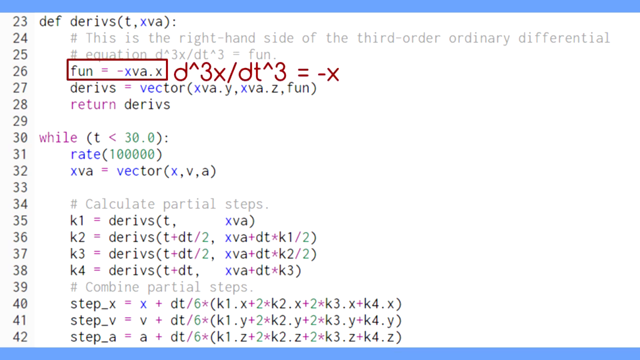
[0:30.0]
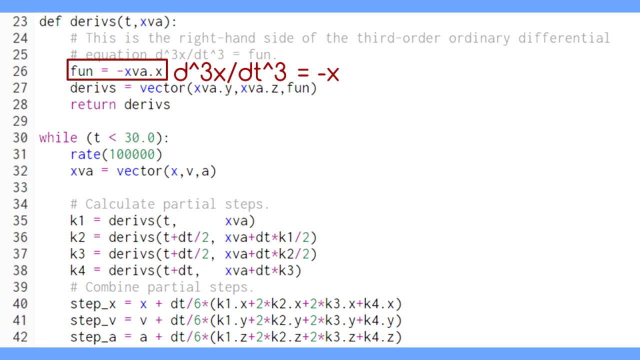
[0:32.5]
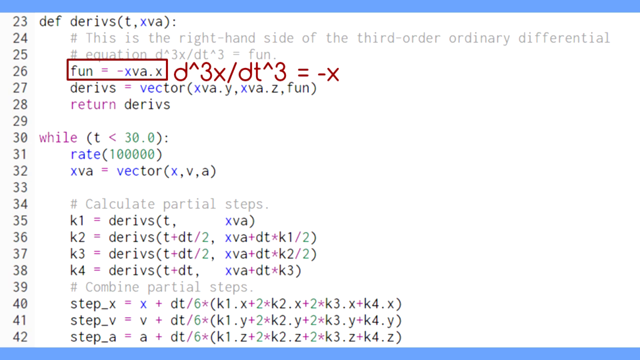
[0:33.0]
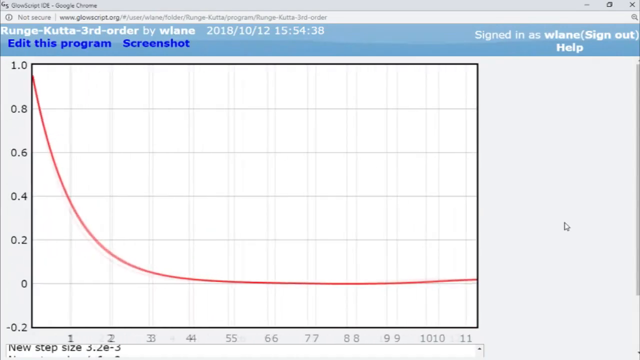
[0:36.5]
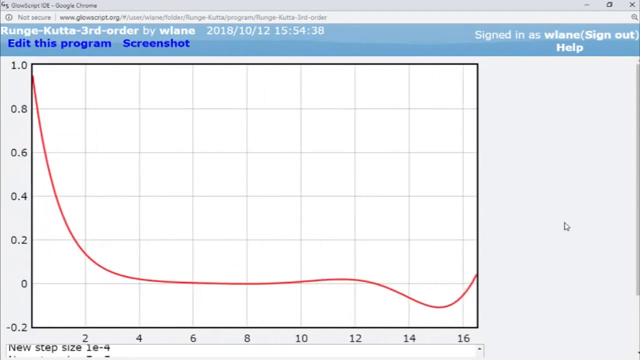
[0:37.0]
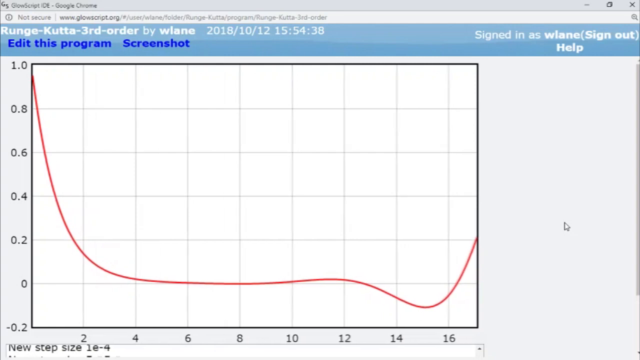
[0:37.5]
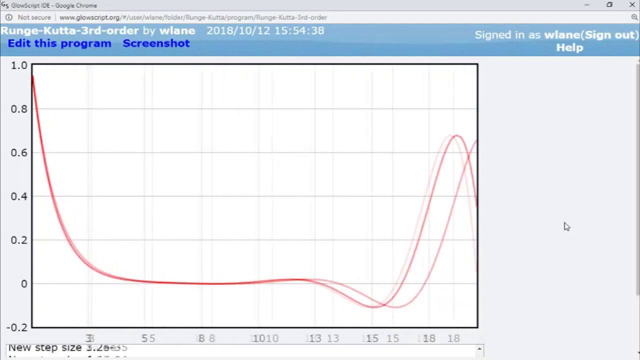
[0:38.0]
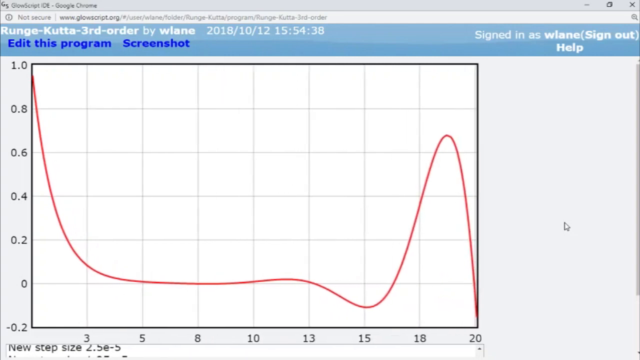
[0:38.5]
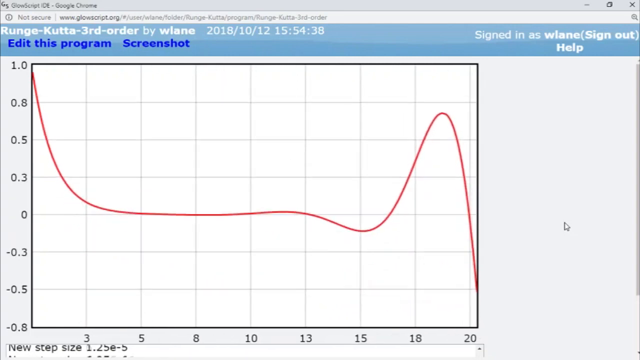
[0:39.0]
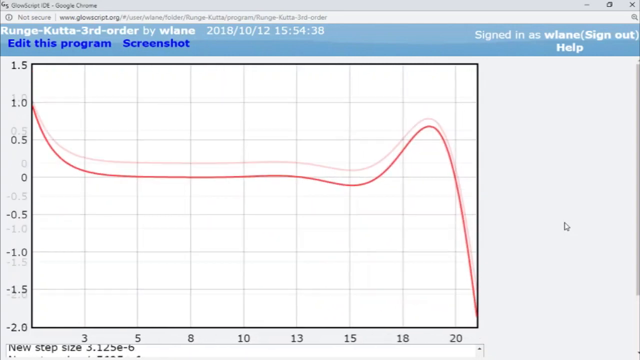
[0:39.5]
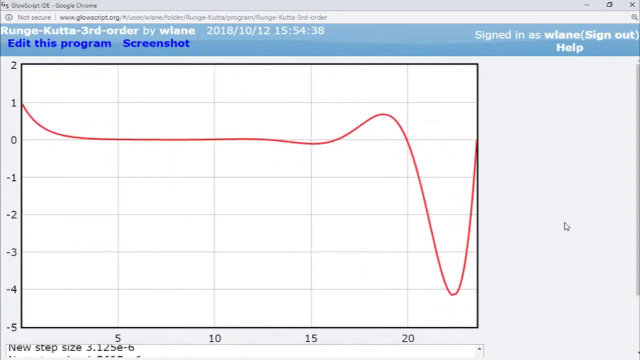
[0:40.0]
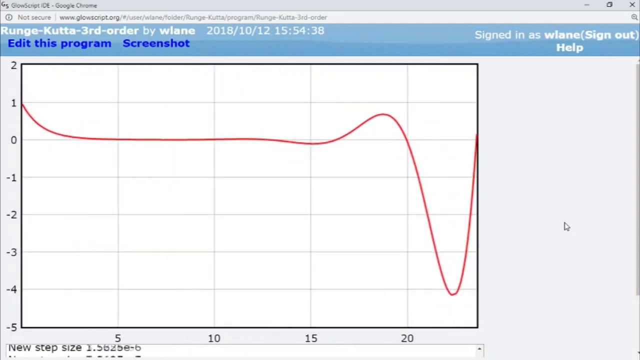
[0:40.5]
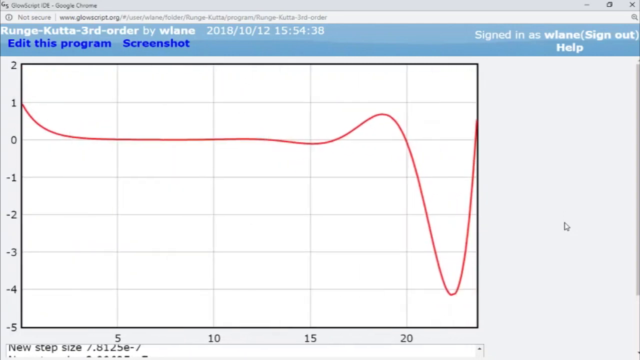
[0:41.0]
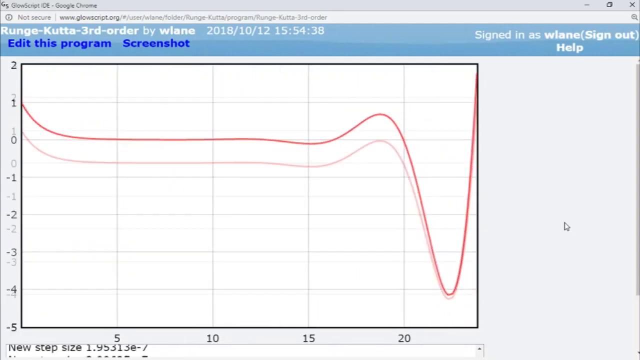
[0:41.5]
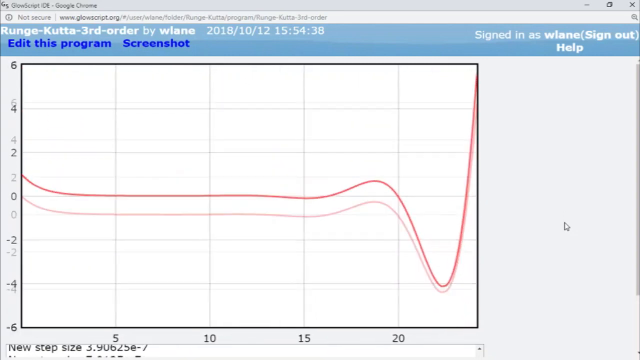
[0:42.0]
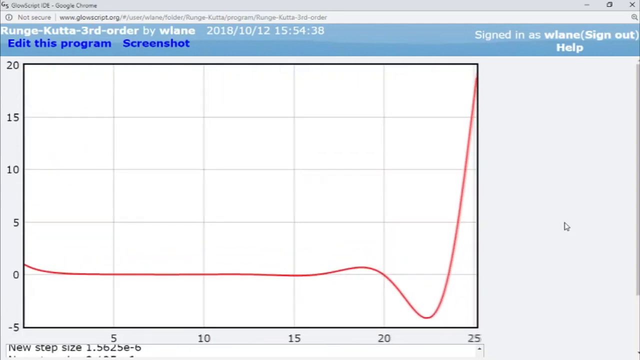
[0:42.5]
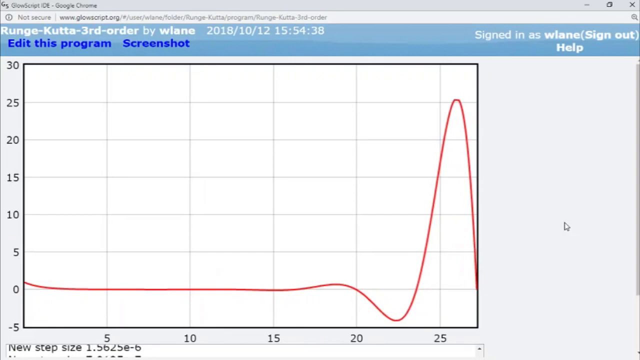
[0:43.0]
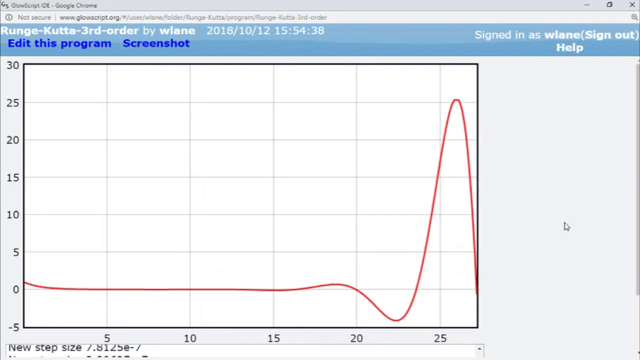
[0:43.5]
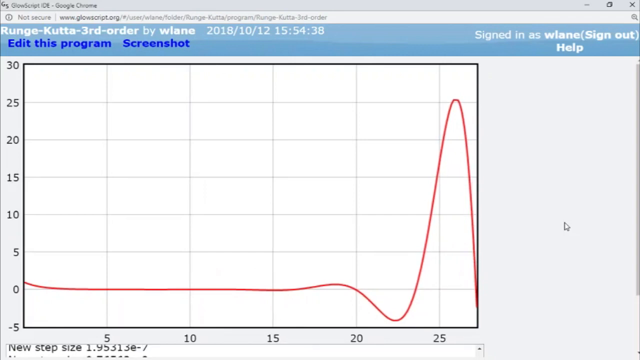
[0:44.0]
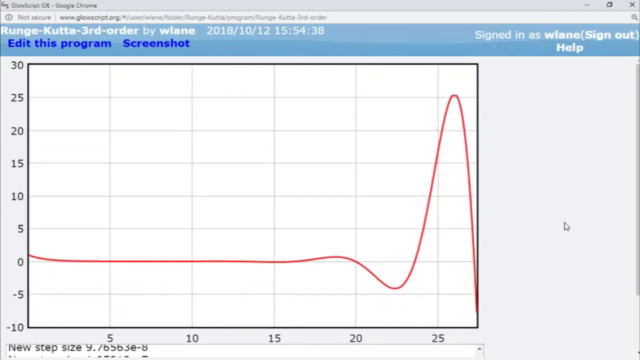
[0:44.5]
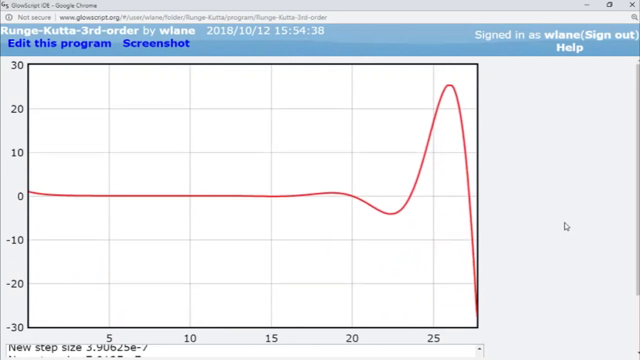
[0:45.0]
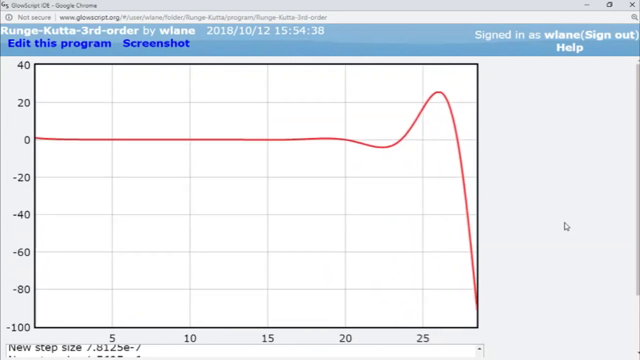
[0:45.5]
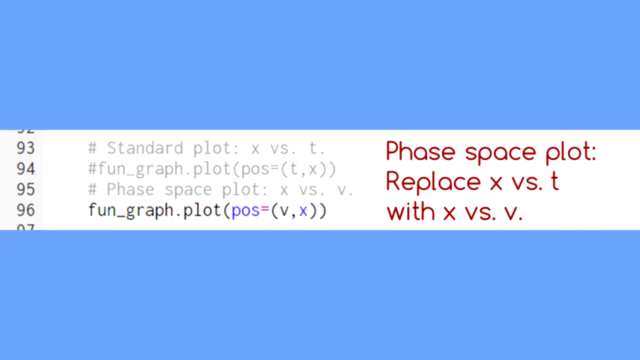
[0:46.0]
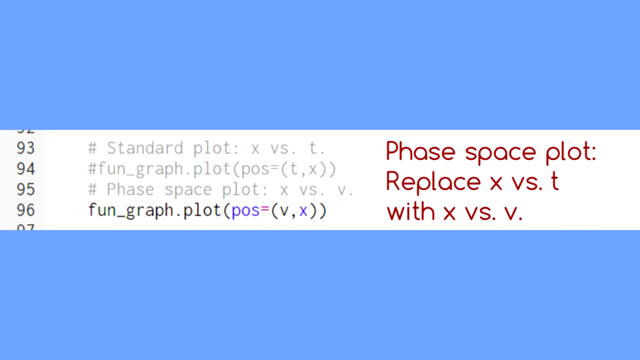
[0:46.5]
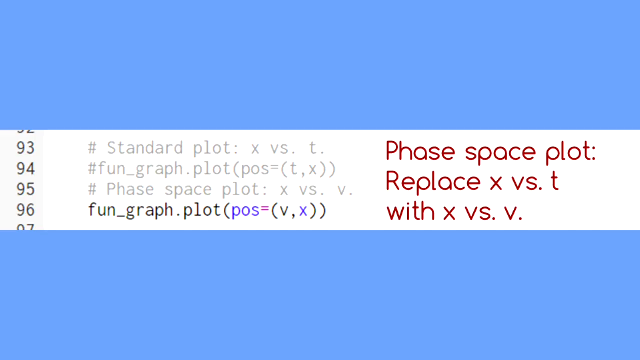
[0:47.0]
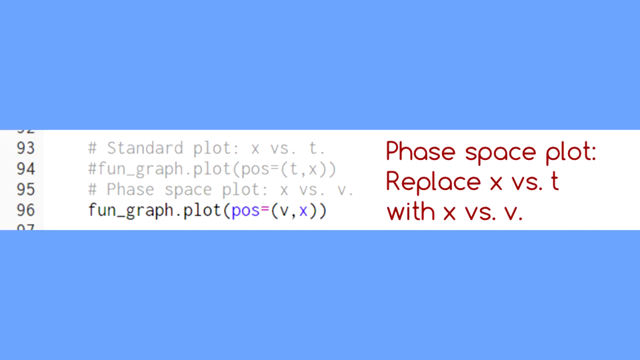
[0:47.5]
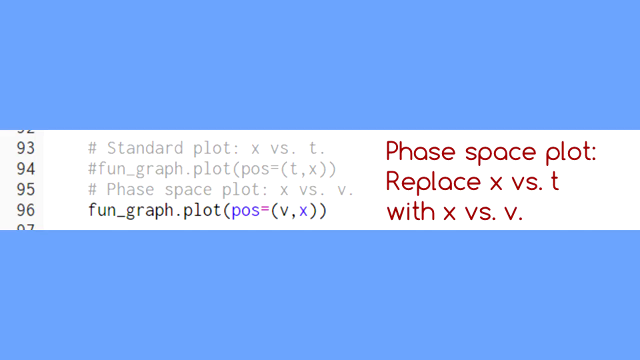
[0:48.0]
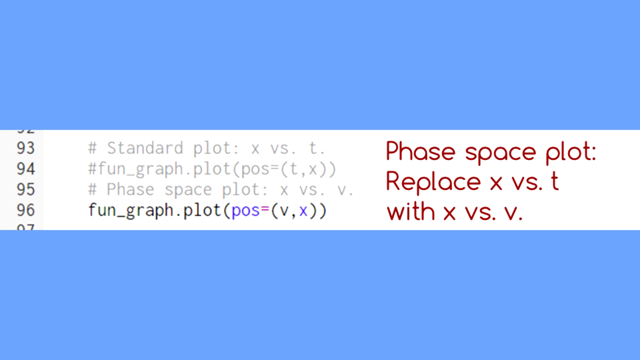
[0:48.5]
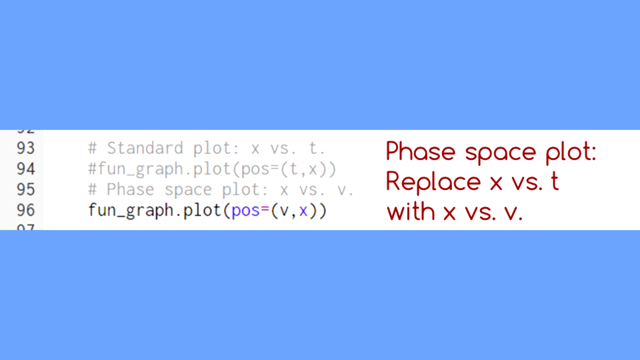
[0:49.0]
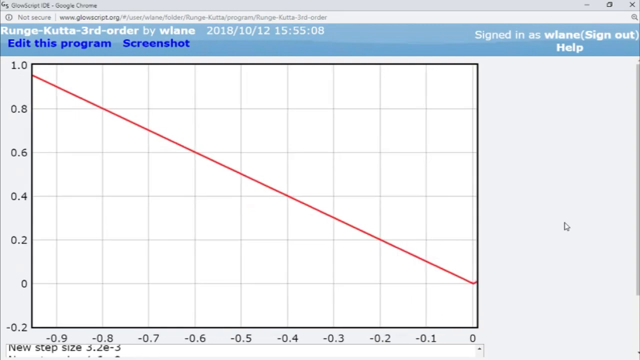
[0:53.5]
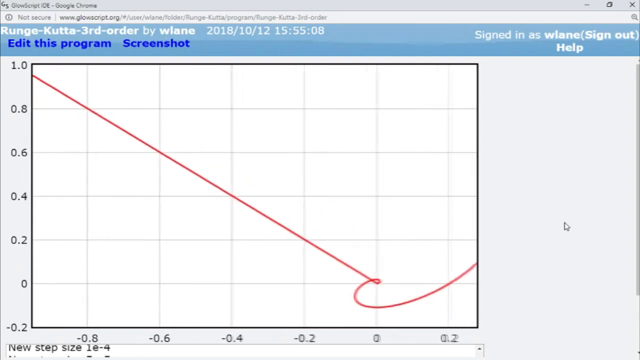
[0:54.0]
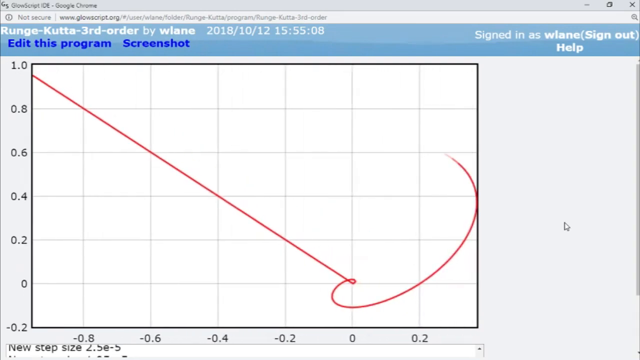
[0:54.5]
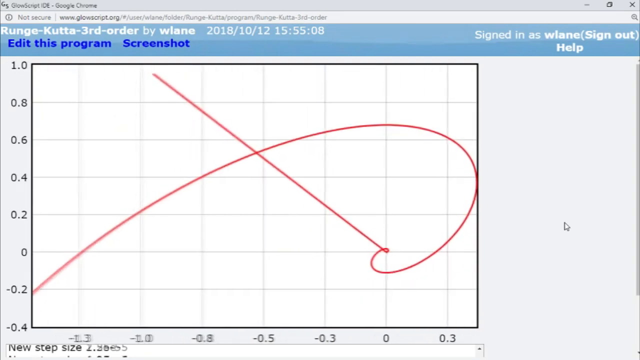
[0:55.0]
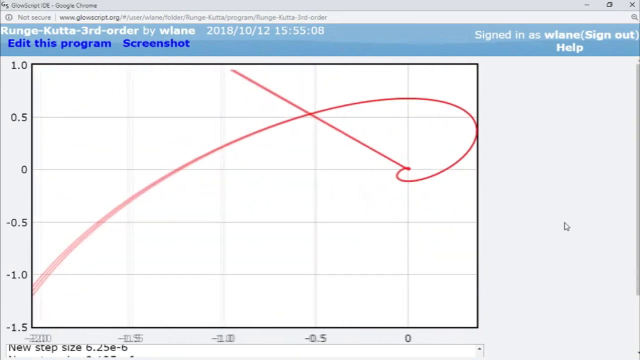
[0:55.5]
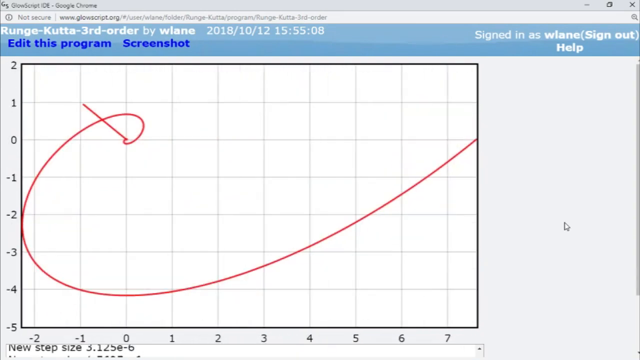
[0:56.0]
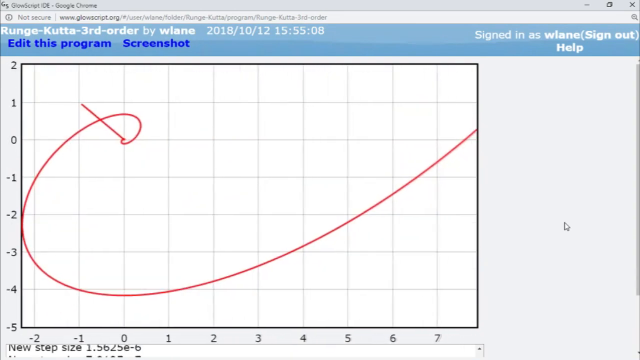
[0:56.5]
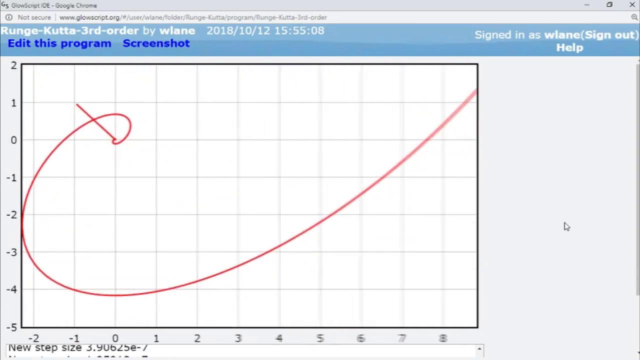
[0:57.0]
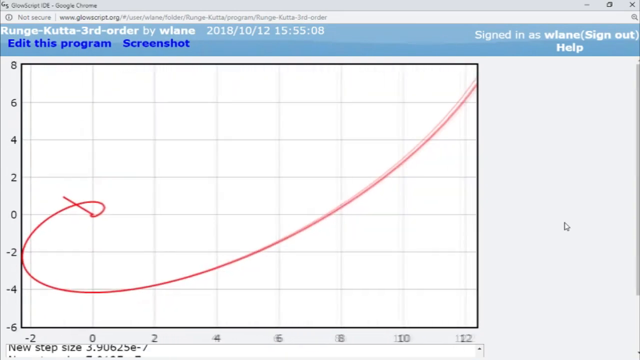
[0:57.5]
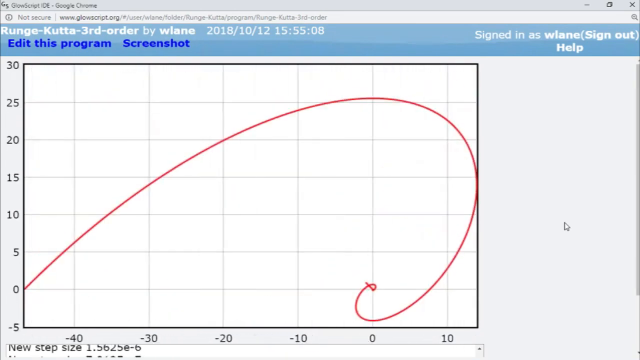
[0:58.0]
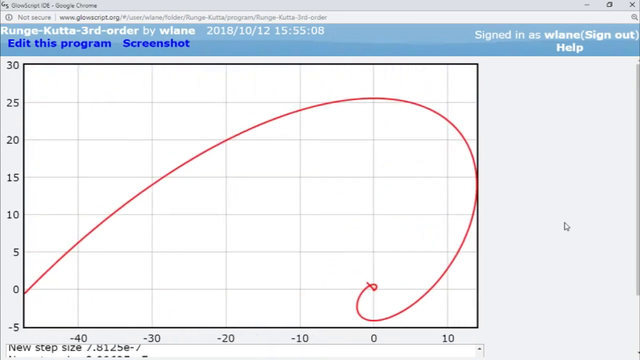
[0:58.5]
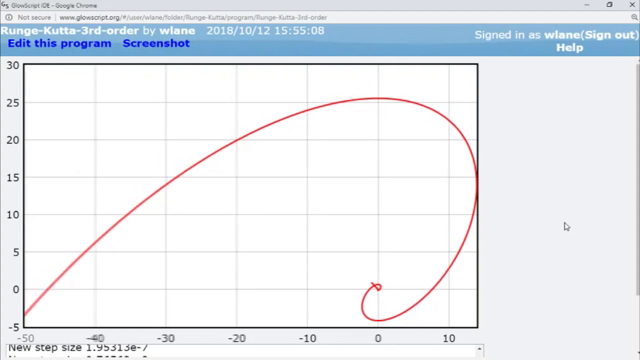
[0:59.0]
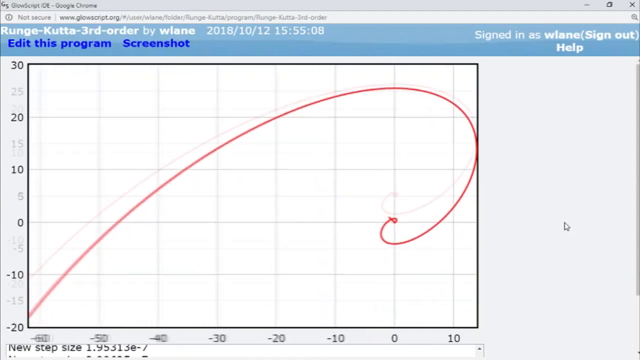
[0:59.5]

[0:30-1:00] A box is then put around fun = -xva.x, marking it as the third differential. The box is removed and the screen stays exactly the same. The vector position ID is set, and a graph plot is produced: a red line graph going from year to year, showing annual profits in thousands. The long red plot starts on the left-hand side, slopes downward, decelerates and moves across, then near the end of the graph, at the center of the screen, rises again and goes back down. The scale of the y-axis is then changed until the graph appears as a red line across with a dip where the x-axis changes from negative to positive.